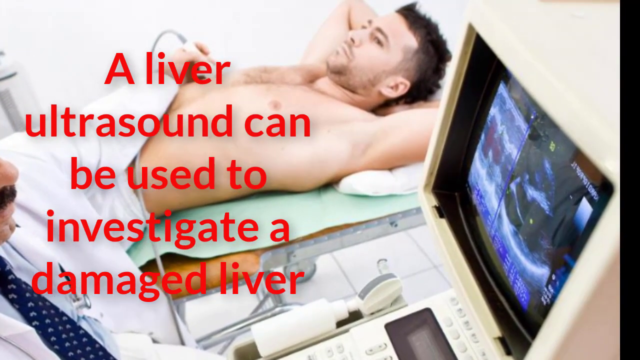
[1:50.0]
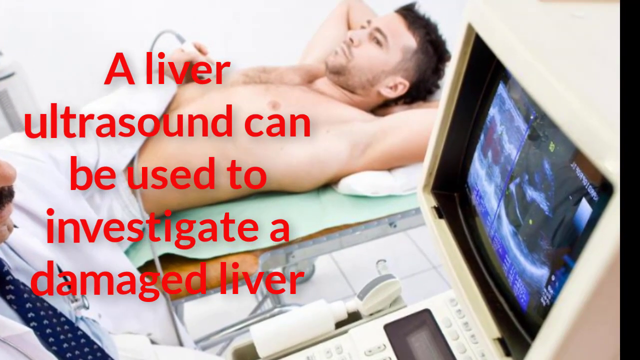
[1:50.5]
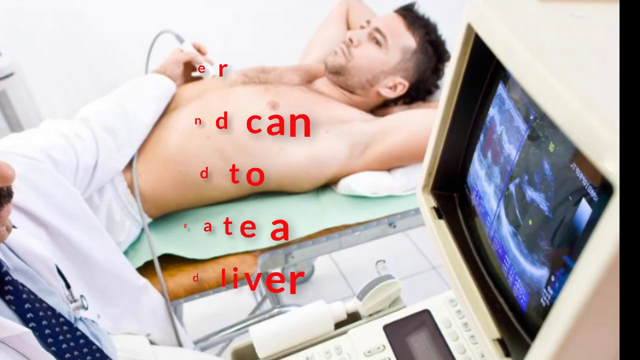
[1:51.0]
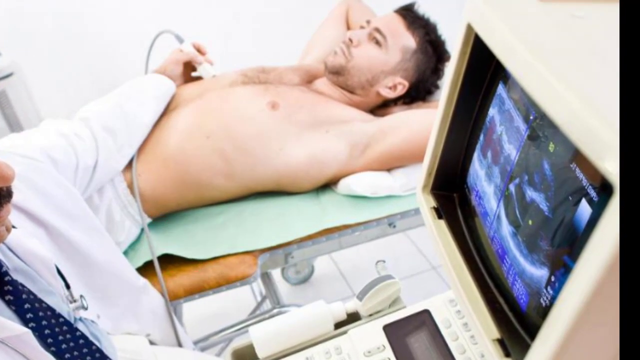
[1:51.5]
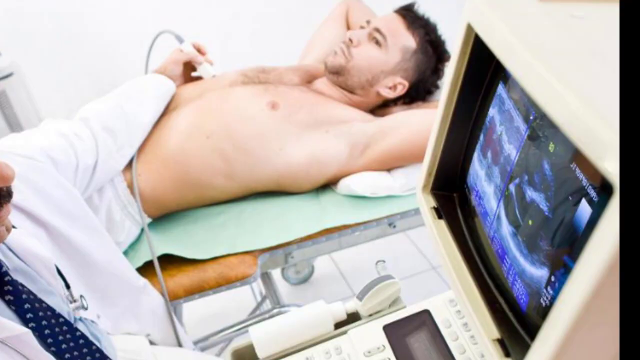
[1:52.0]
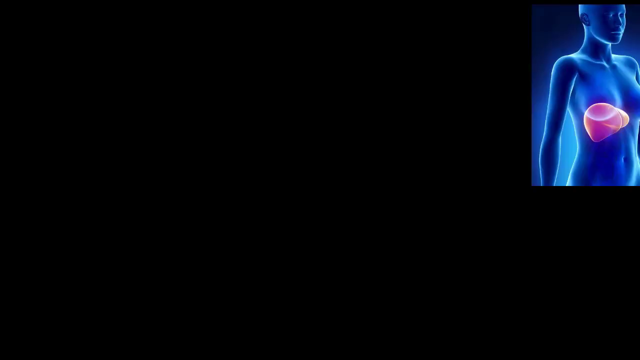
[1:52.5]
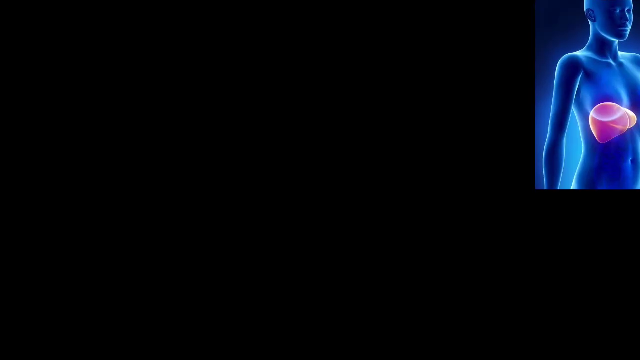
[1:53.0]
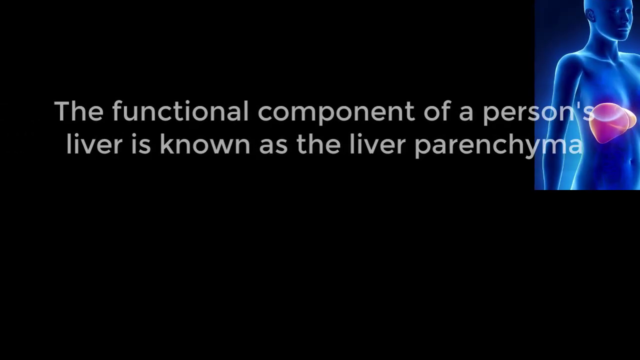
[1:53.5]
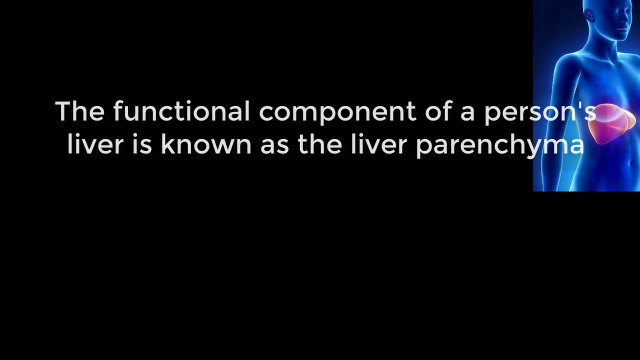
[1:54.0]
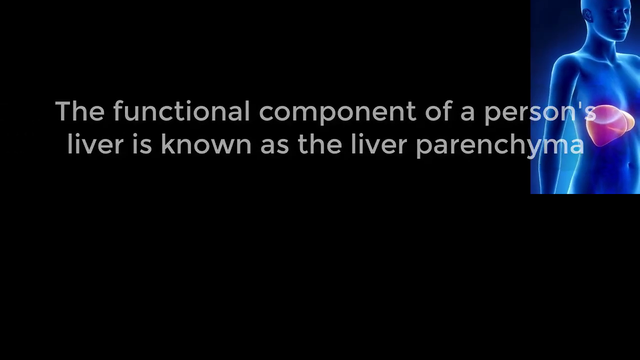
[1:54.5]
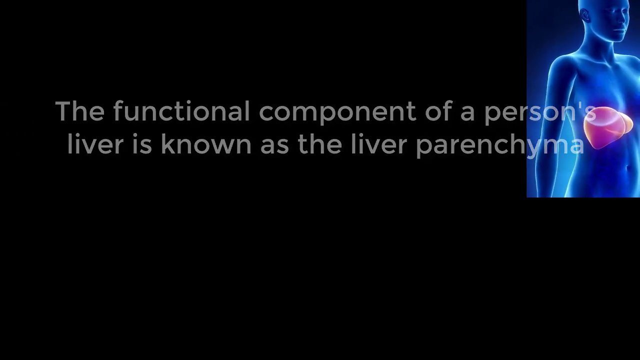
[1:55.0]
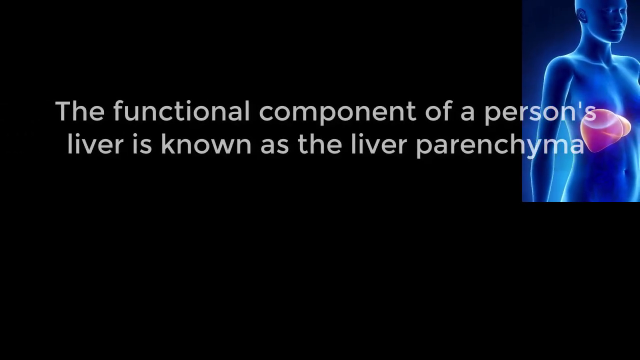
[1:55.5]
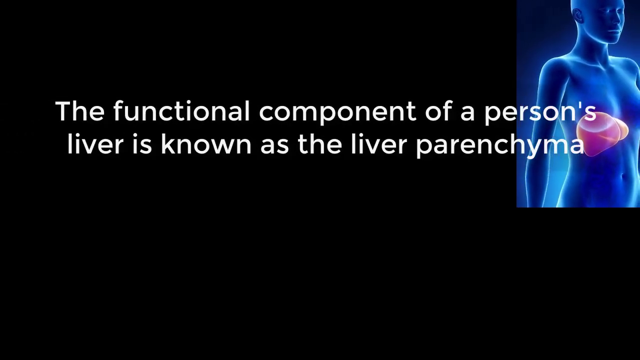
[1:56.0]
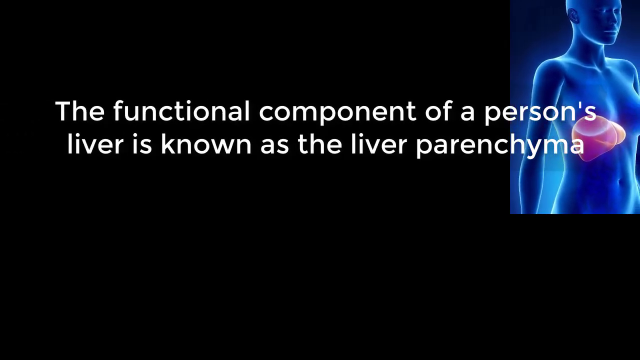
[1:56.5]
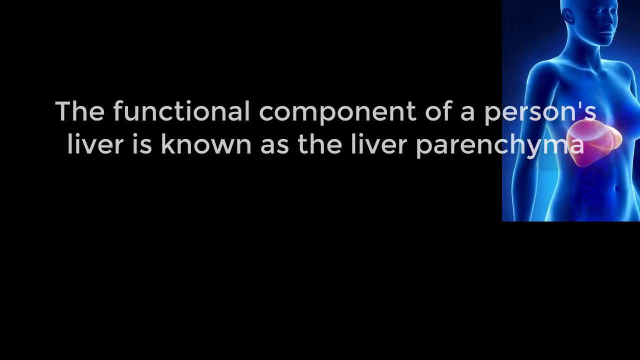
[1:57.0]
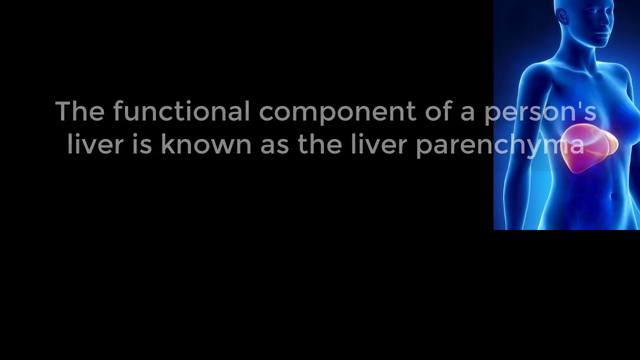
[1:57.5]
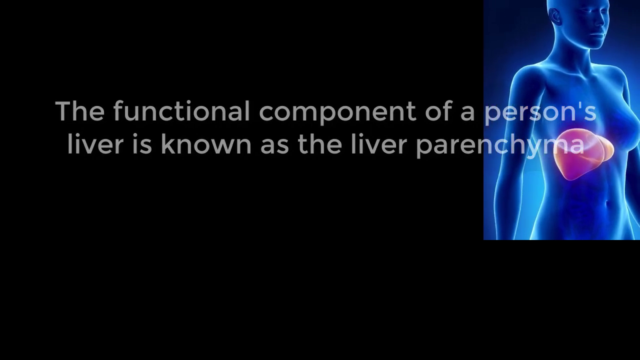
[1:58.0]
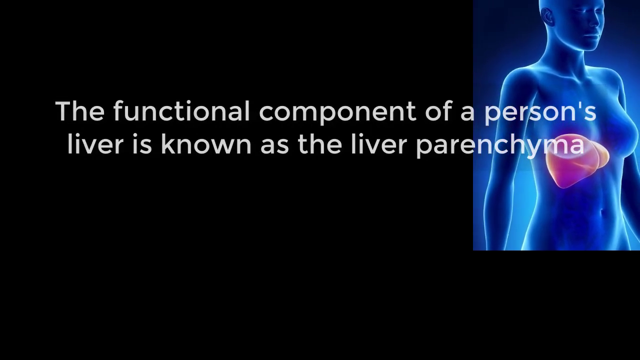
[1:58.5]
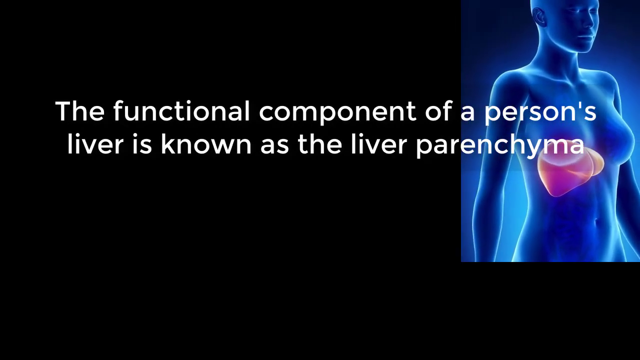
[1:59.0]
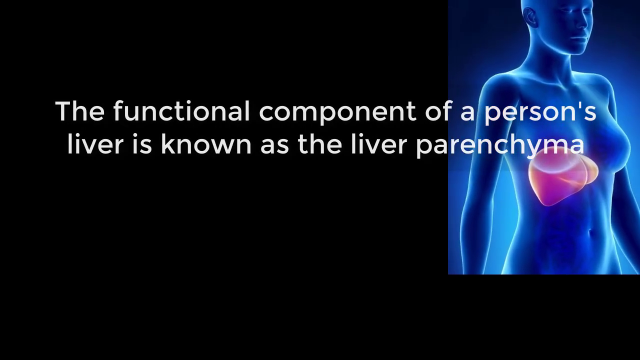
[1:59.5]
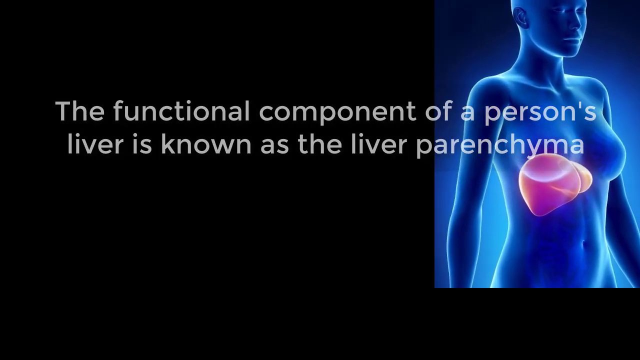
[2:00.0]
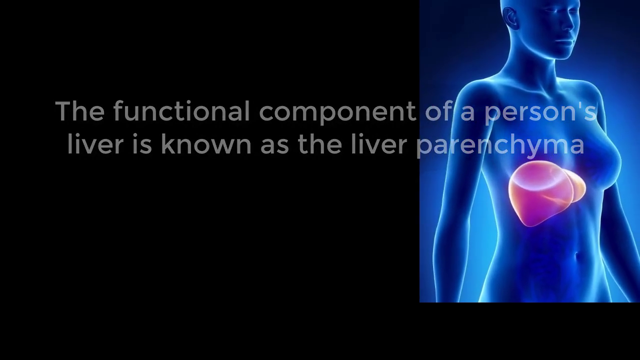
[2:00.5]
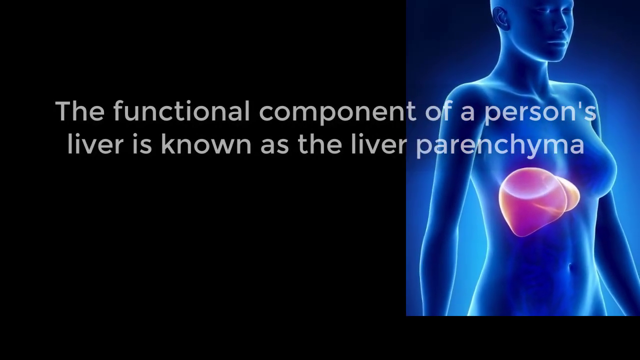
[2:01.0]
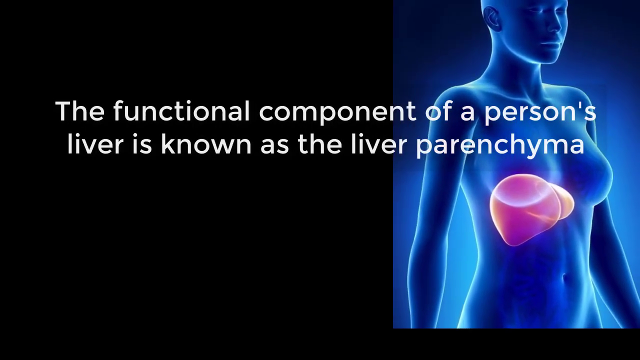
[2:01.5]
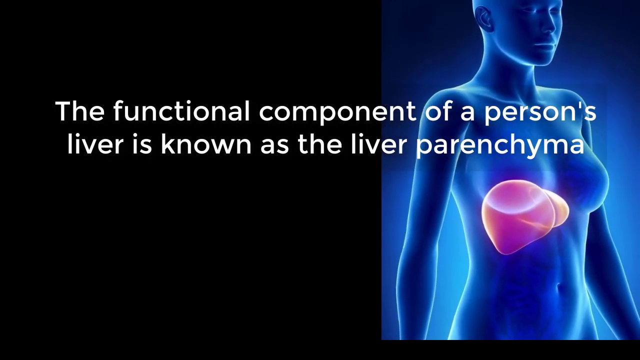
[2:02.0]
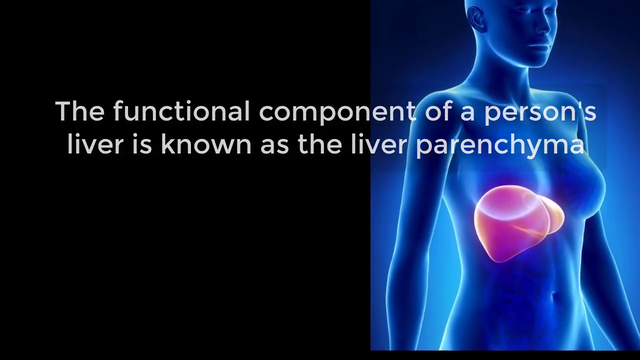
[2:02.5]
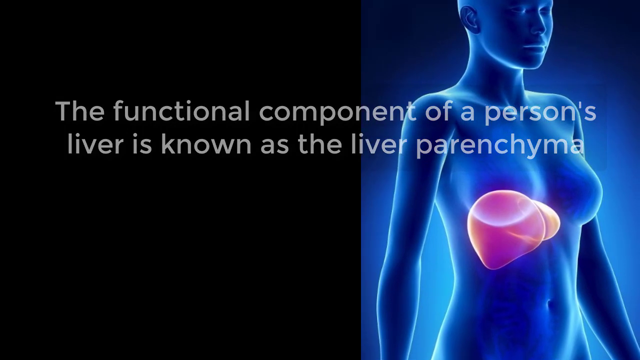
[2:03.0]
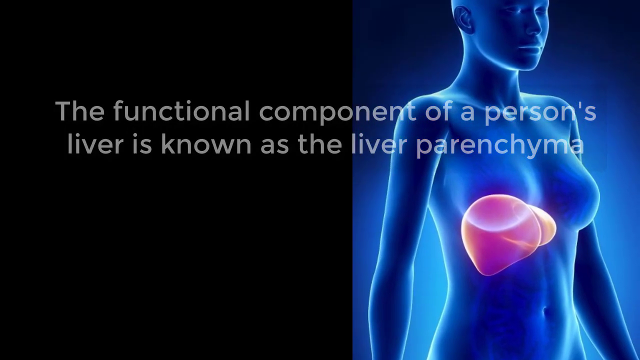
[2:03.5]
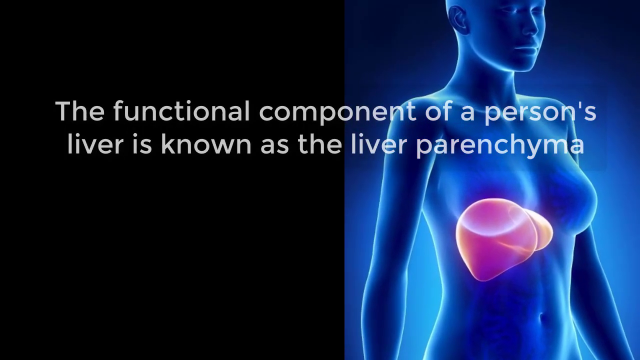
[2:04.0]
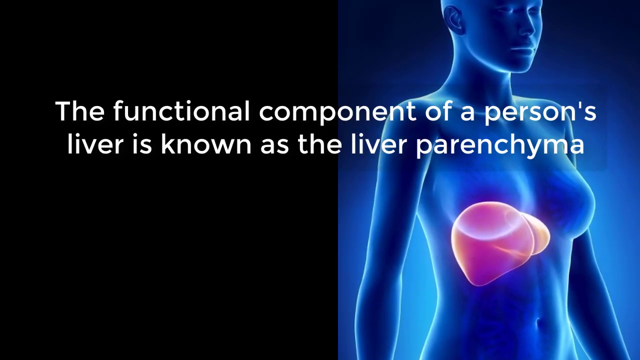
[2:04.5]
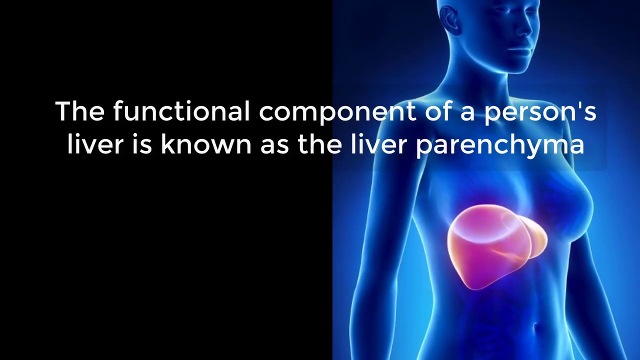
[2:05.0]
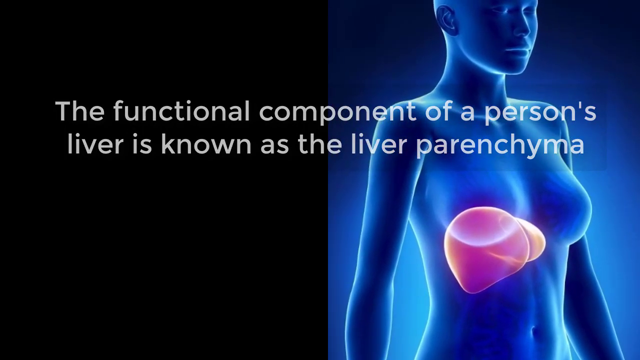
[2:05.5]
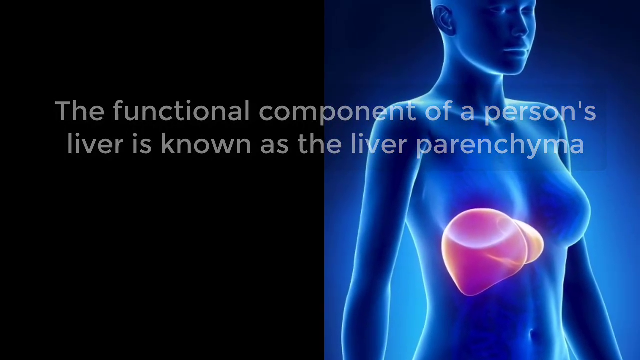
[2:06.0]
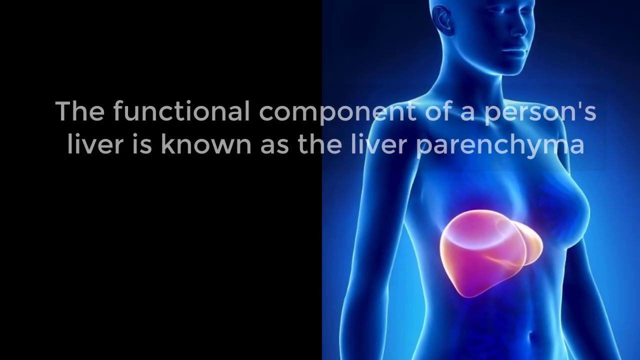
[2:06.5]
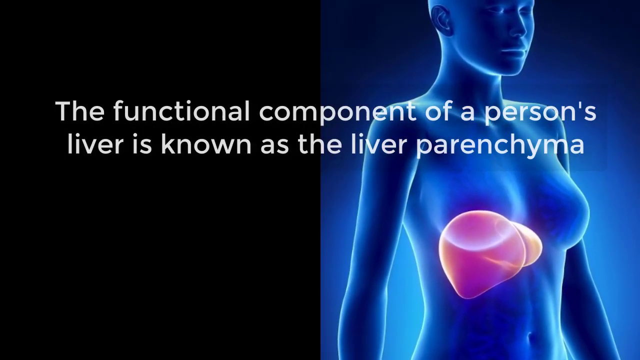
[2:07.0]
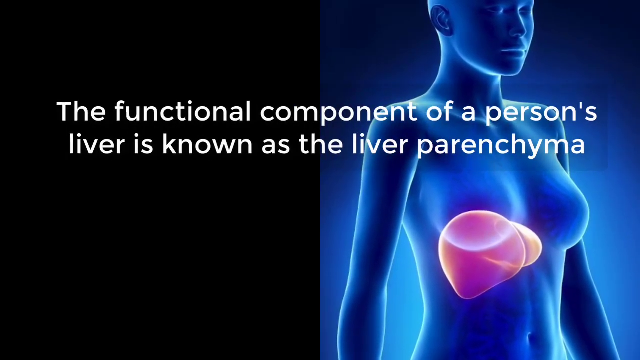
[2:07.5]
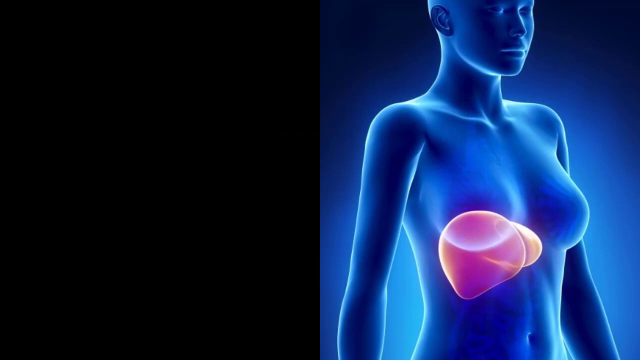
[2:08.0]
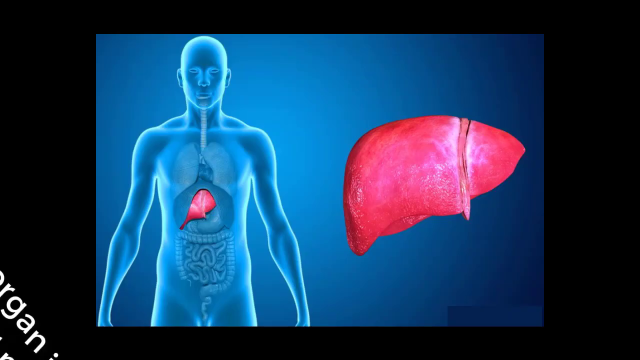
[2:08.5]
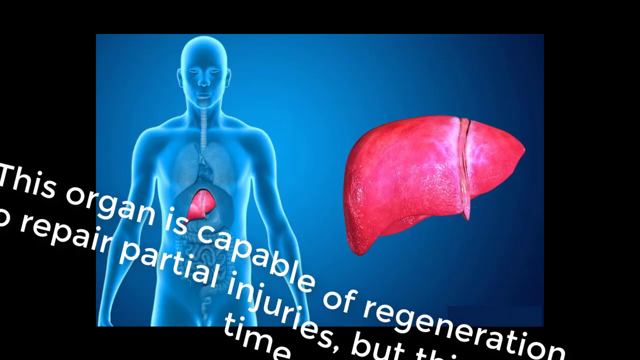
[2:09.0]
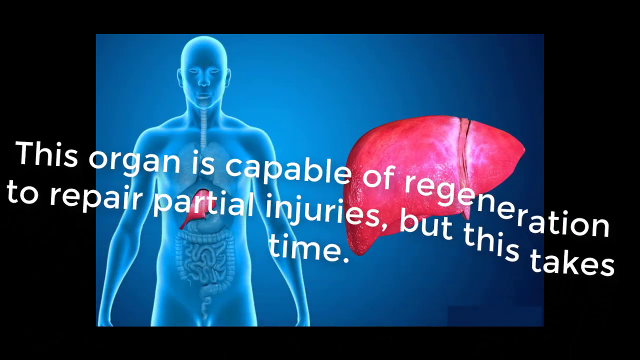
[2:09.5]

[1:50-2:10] A patient in a doctor's office lies on the bed with his shirt off. The doctor in front of him wears a white coat and blue tie, has a mustache, and stands in front of what looks like an ultrasound machine, whose screen shows the part of the body being examined. In the doctor's left hand, an instrument hovers over the patient's stomach. It then cuts to a scene with white text and, in the top right, a kind of blue silhouette of a person whose body can be seen through, showing an image of a liver. The white text in the foreground reads "the functional component of a person's liver is known as the liver parenchyma." The camera starts to zoom in, giving a close-up of the image from the top right corner.